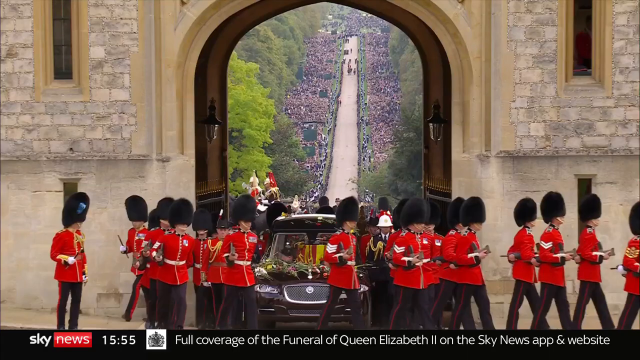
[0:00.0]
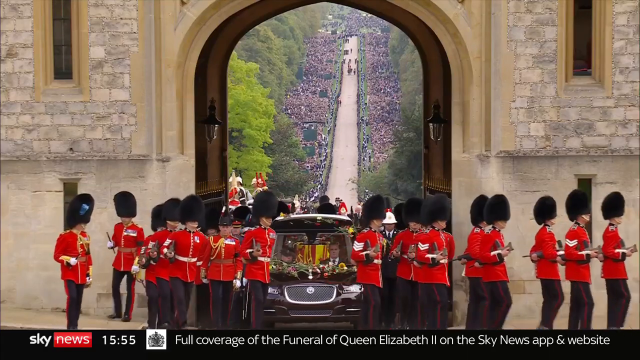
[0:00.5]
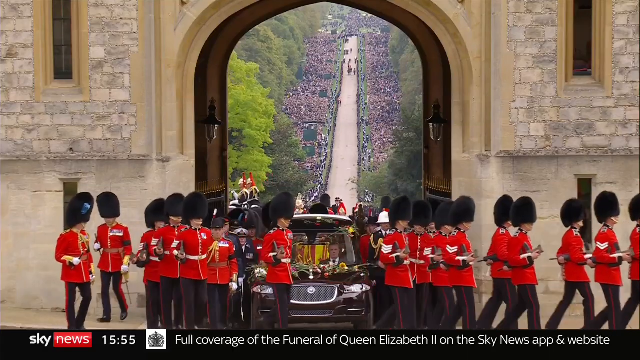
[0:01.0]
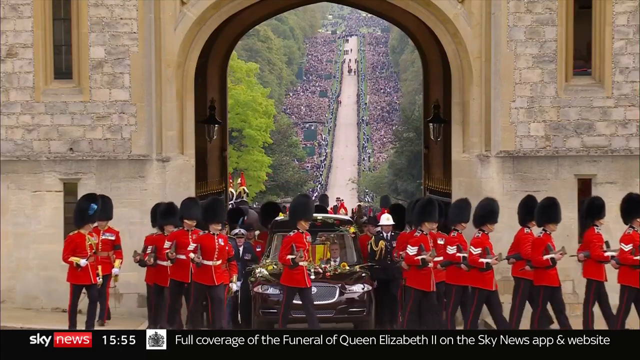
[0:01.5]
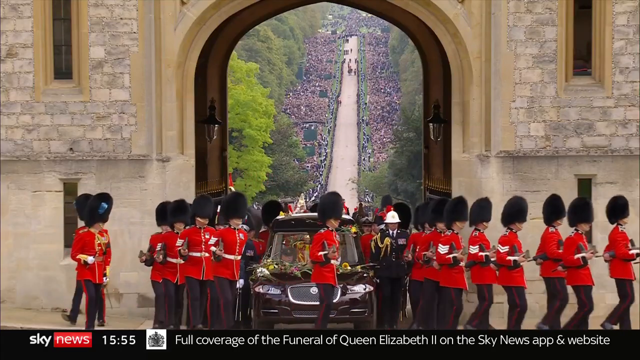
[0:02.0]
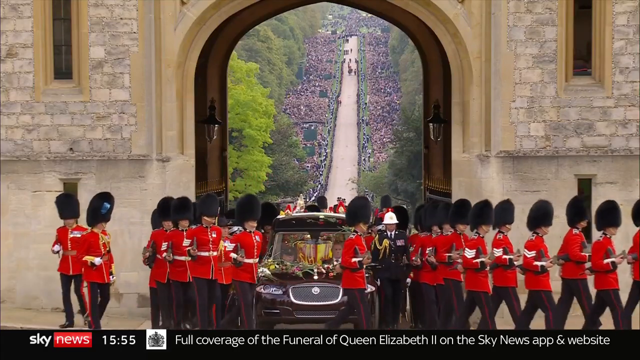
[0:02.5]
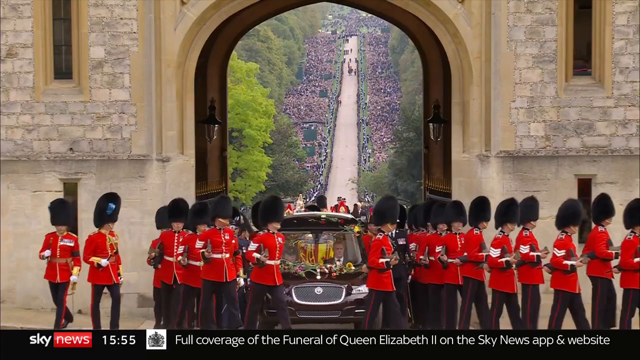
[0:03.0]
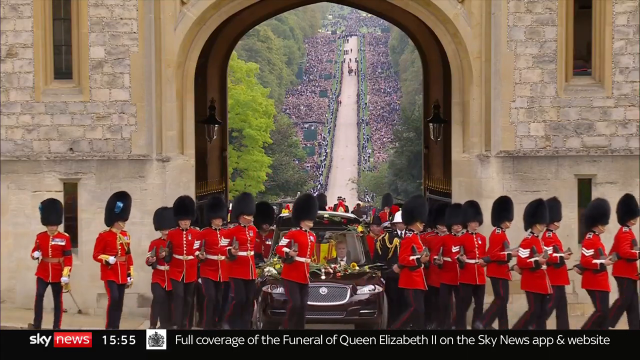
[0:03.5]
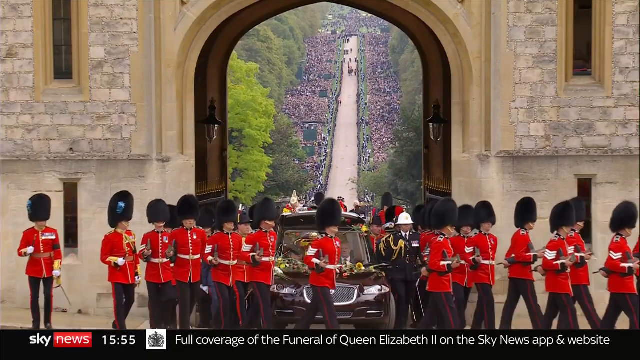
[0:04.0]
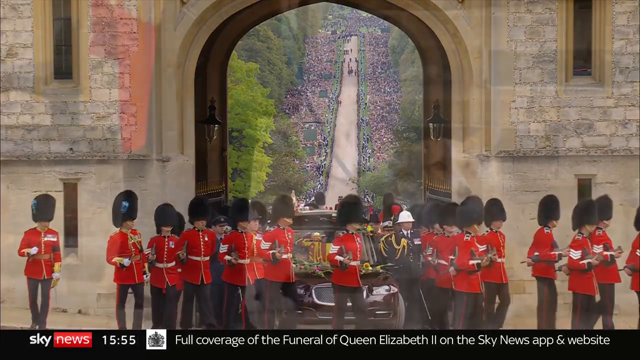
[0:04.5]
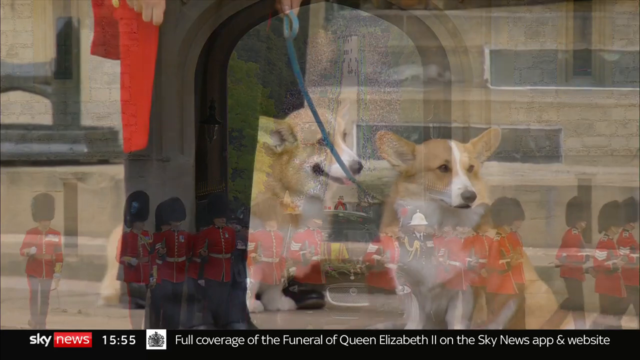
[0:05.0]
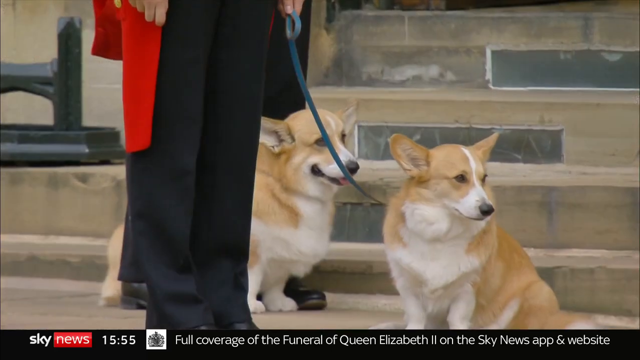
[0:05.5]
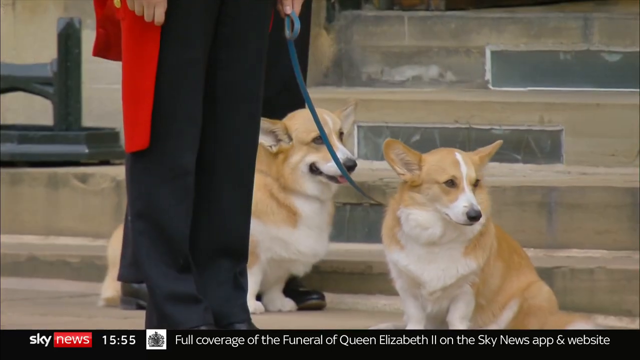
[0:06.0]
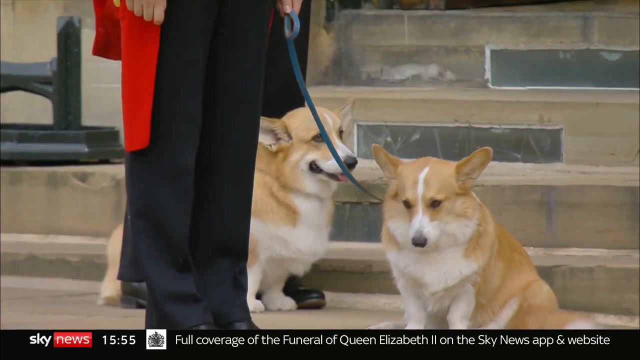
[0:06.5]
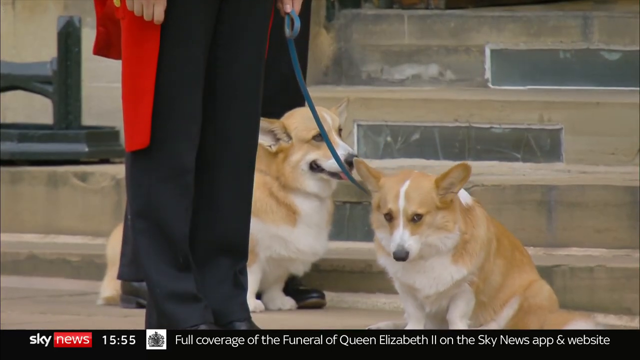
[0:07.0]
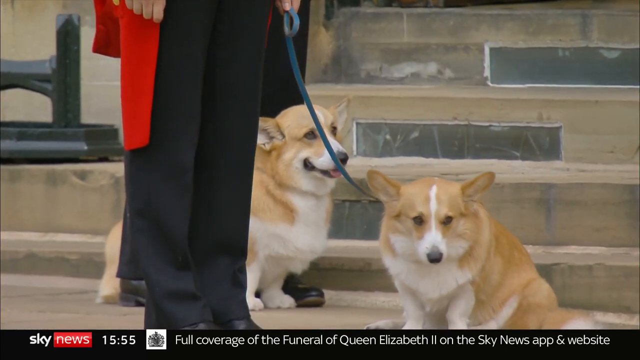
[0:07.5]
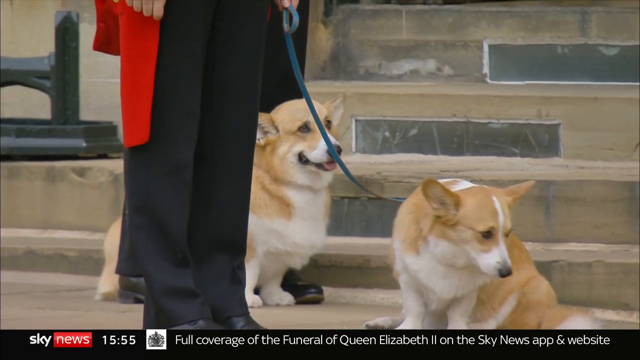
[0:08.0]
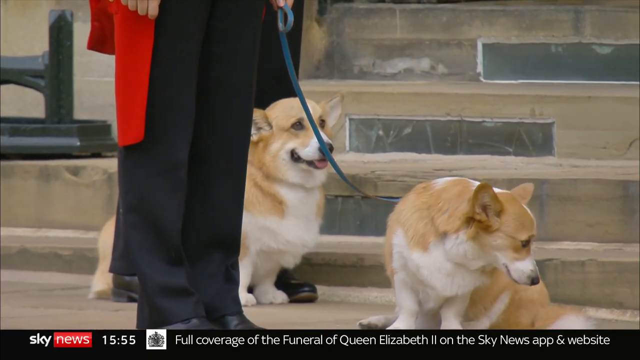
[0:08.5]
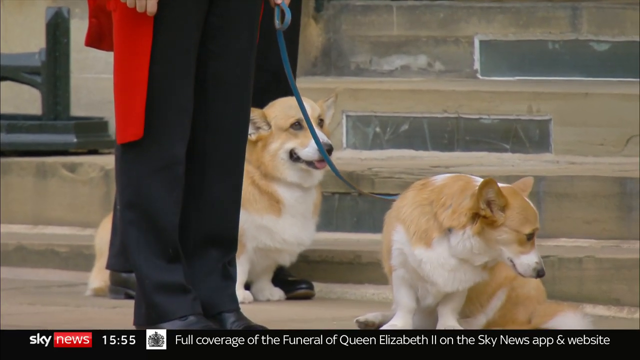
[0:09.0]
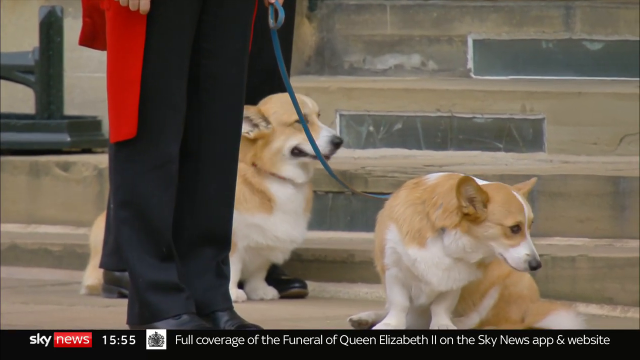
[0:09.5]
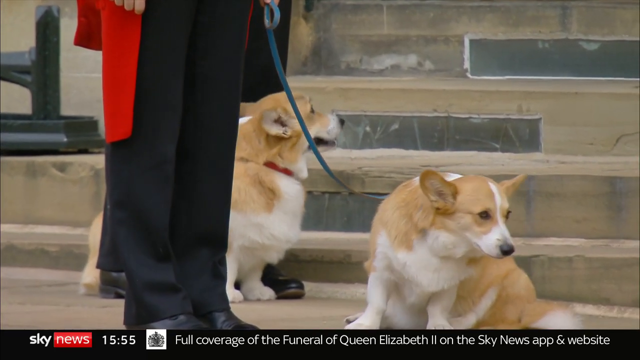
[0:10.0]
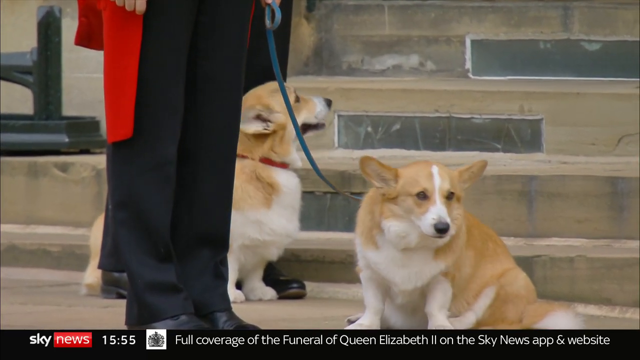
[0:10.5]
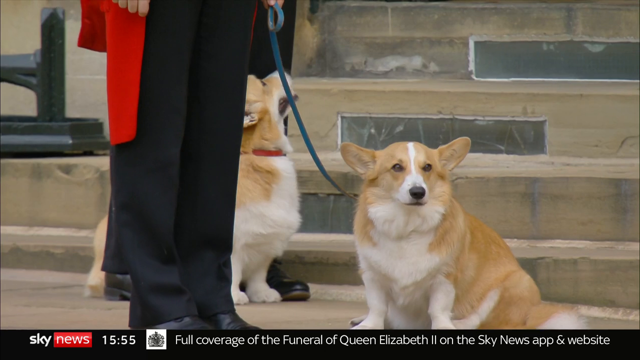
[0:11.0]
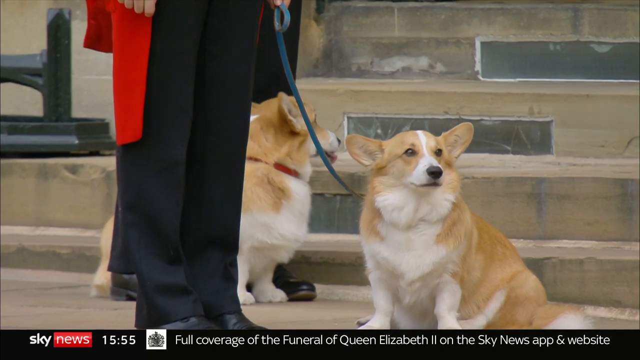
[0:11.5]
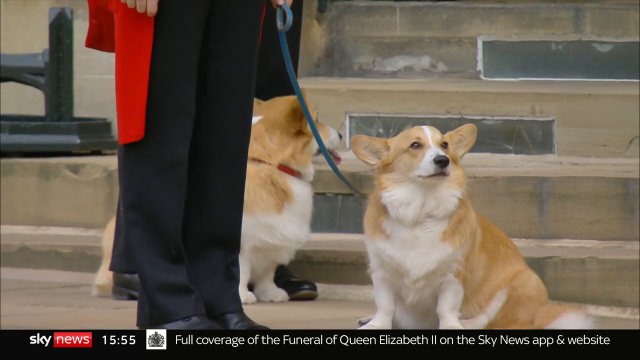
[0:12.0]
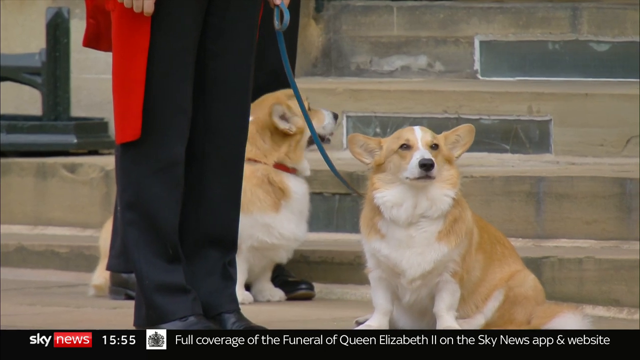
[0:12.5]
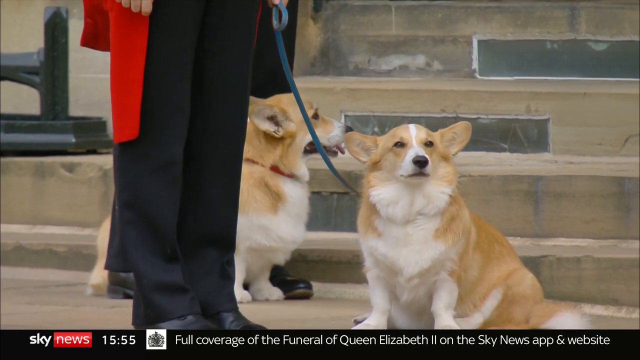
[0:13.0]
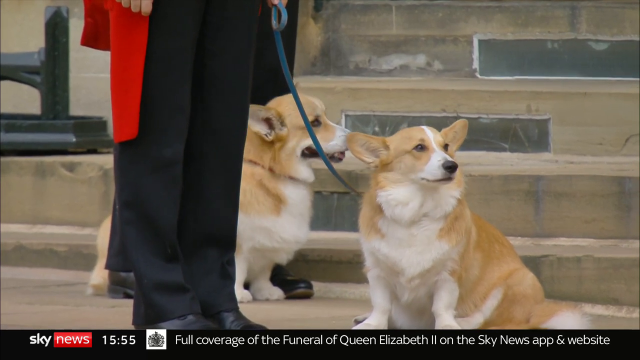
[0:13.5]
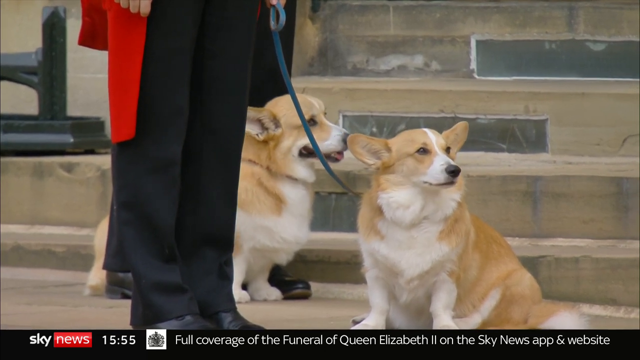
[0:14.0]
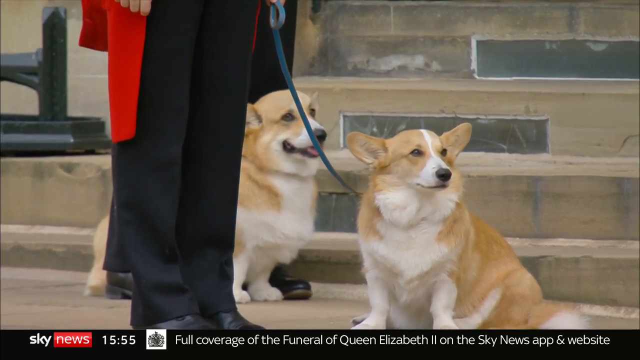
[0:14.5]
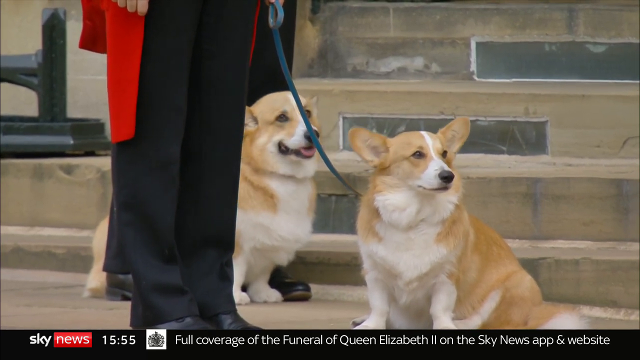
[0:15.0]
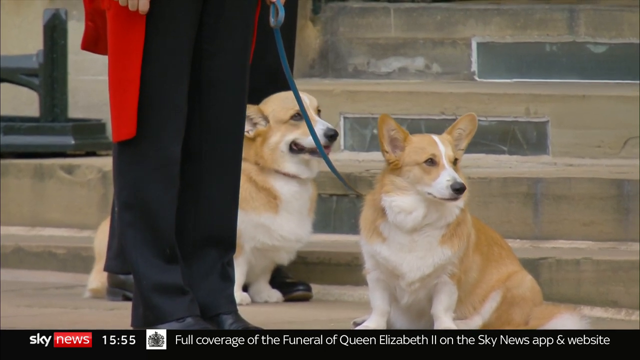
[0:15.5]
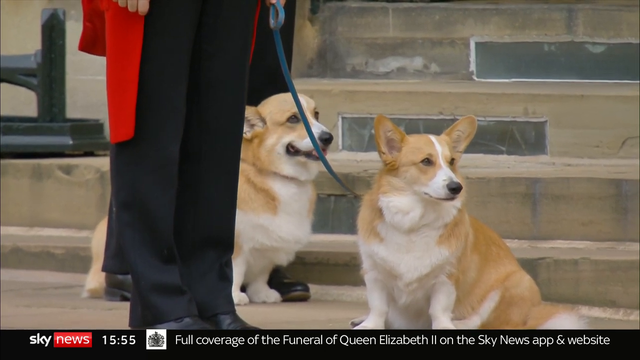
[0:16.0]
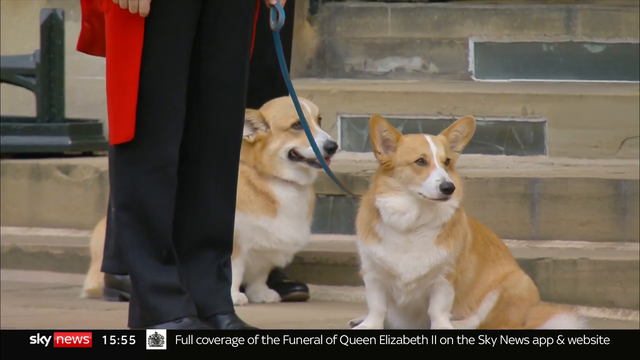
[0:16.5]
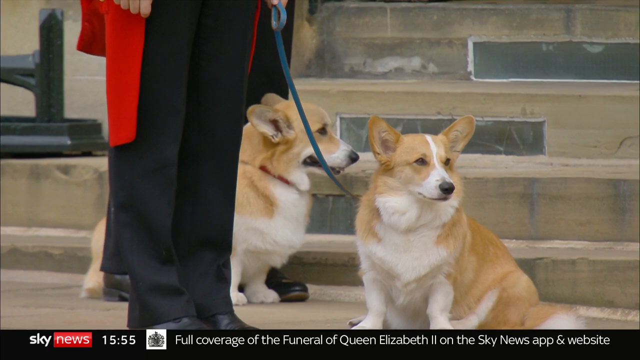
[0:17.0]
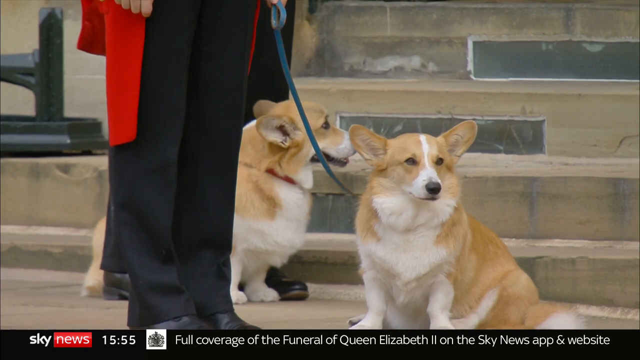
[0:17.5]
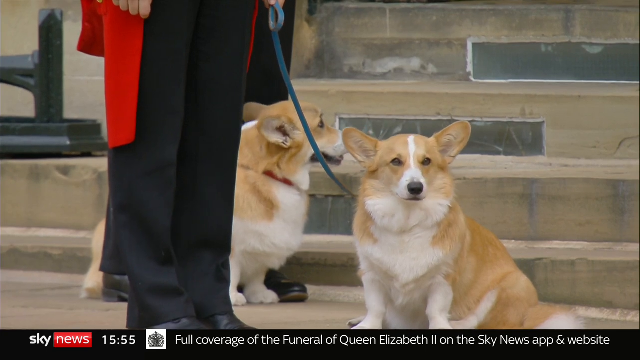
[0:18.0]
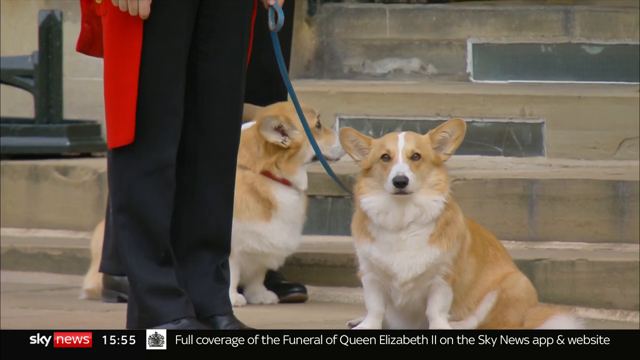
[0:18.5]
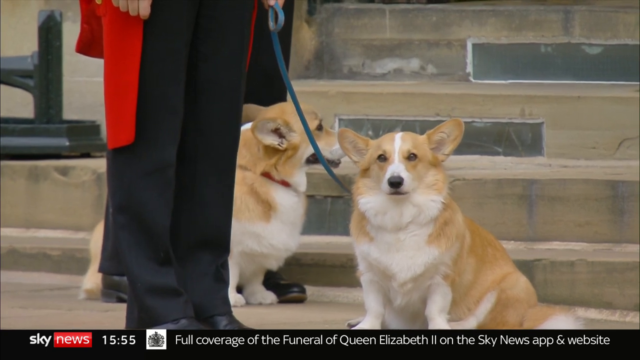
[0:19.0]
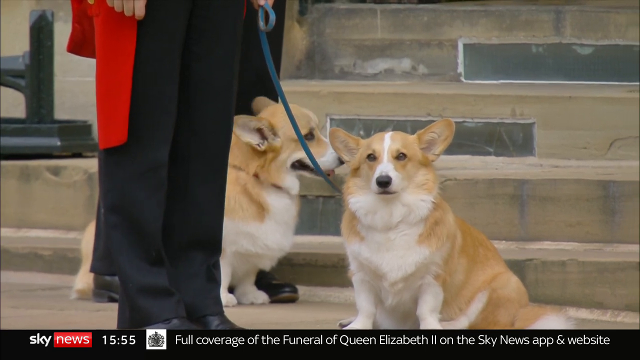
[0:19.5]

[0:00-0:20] A Sky News report shows a view of what looks like Buckingham Palace. A large number of guards, at least 25 of them from left to right, stand in front of the palace. They spread out to the right and left, allowing a vehicle through. It is a procession of some sort, possibly a funeral. In the background is an entrance through which they are coming, with masses of people on the right and left of the road. Text at the bottom reads "full coverage of Queen Elizabeth II." Two corgi dogs are then shown standing beside one of the guardsmen. The words "Sky News" appear in the lower left, and the time shown is 1555.